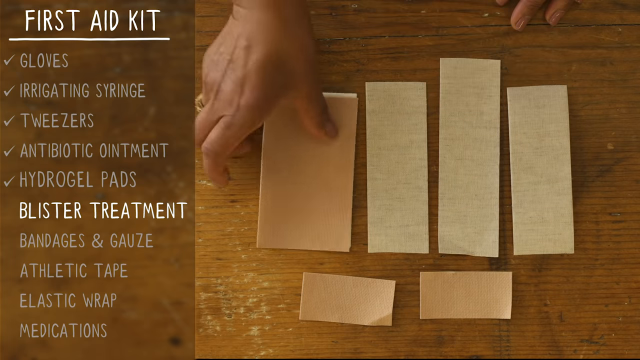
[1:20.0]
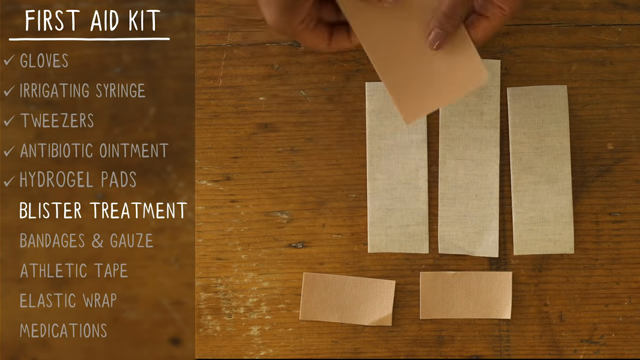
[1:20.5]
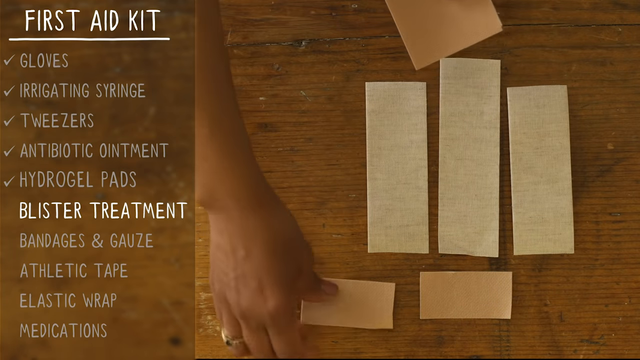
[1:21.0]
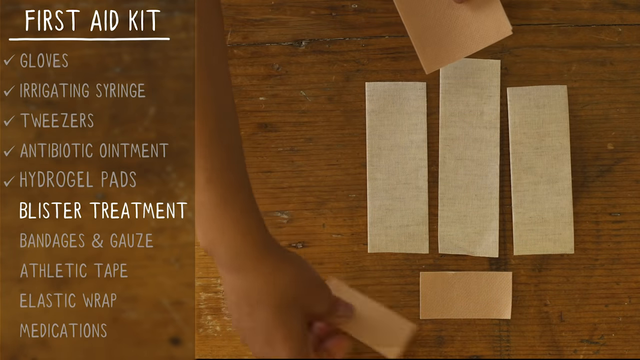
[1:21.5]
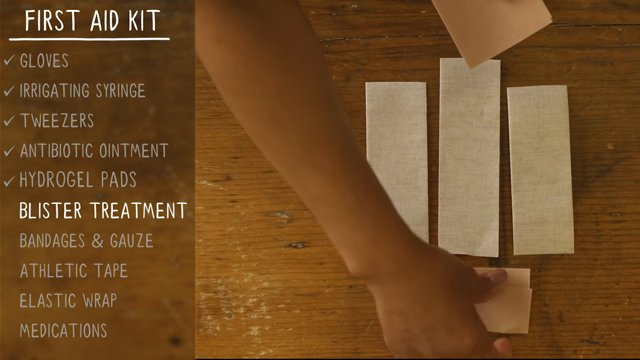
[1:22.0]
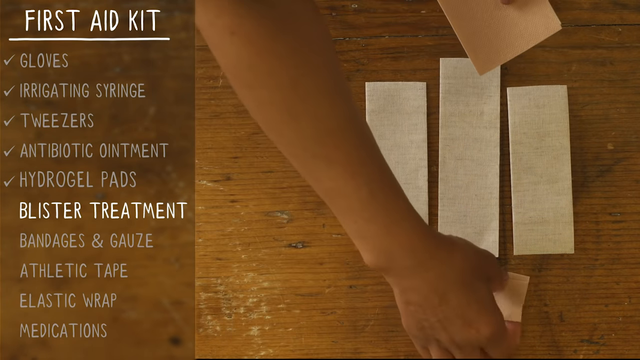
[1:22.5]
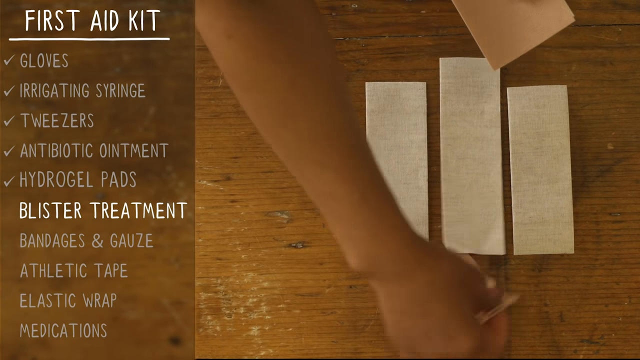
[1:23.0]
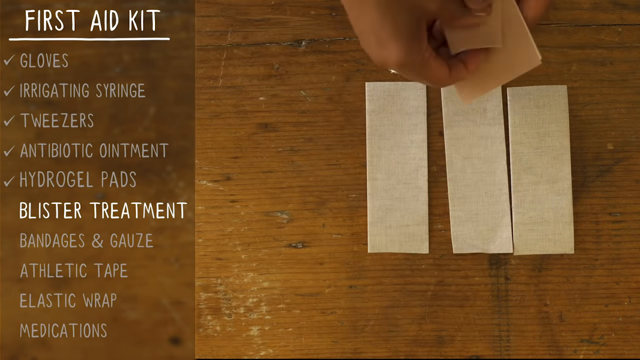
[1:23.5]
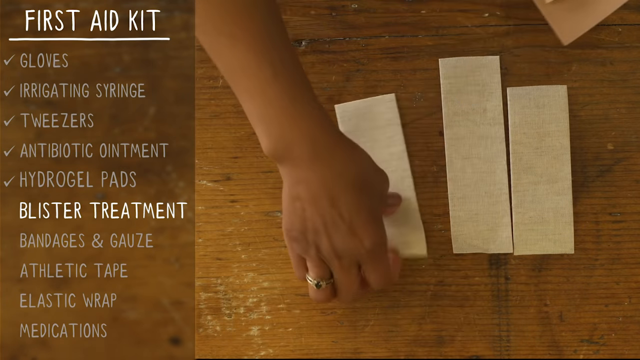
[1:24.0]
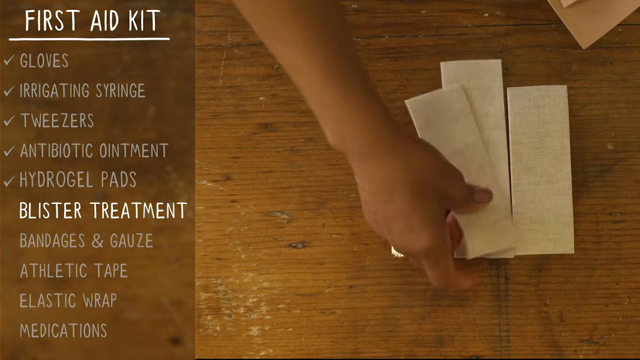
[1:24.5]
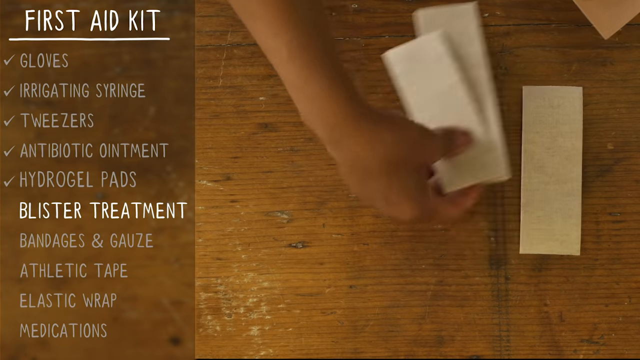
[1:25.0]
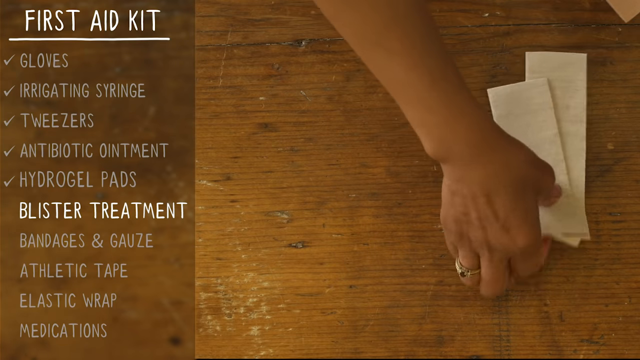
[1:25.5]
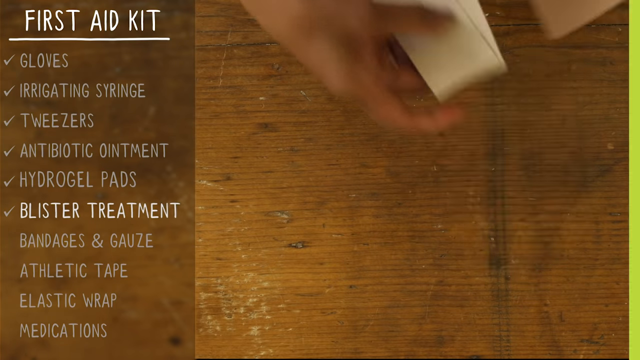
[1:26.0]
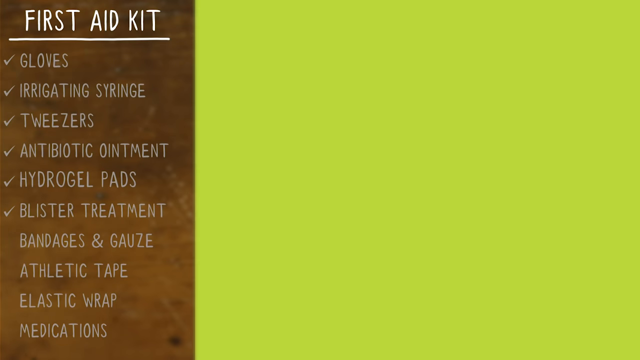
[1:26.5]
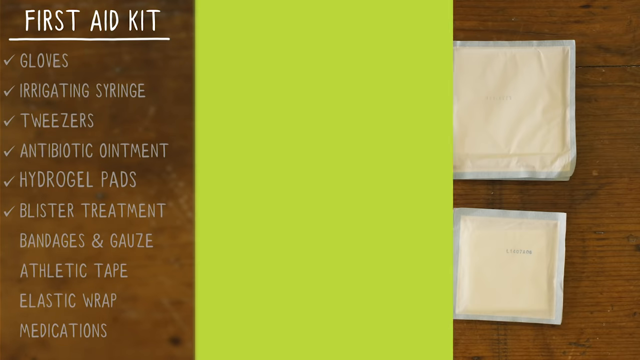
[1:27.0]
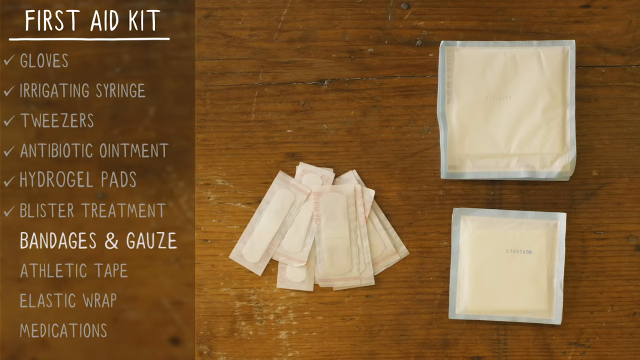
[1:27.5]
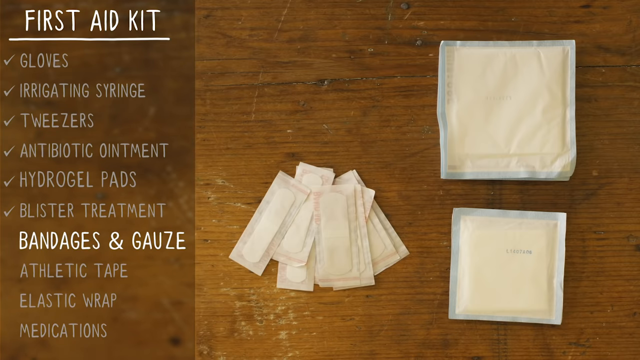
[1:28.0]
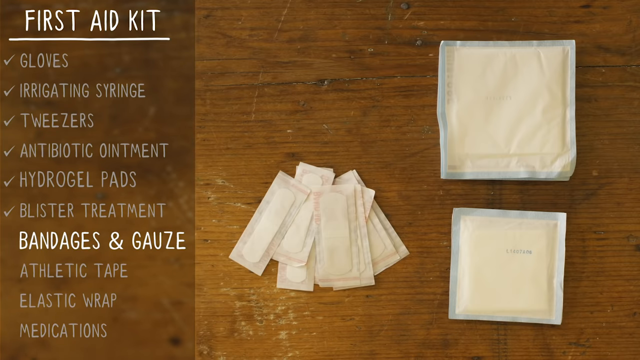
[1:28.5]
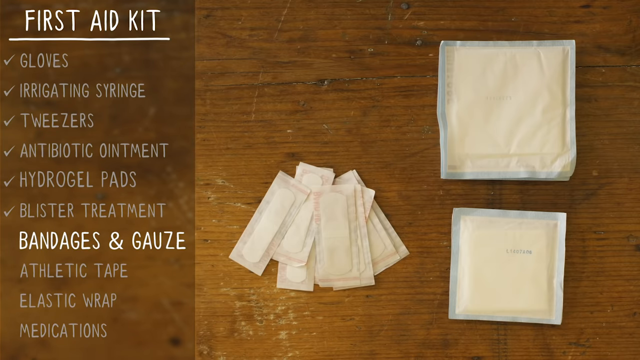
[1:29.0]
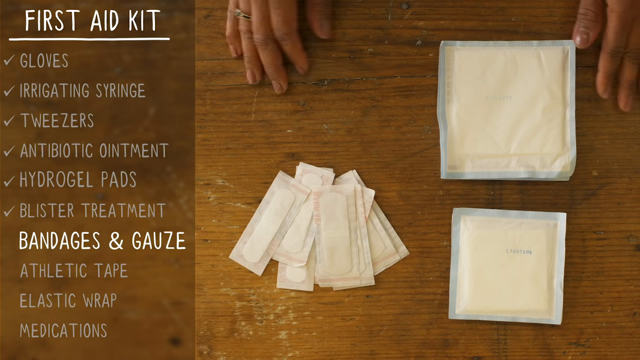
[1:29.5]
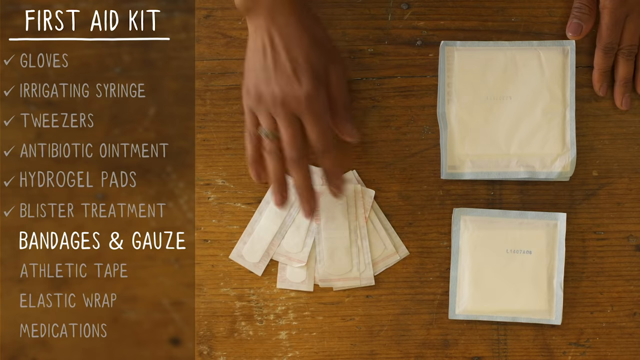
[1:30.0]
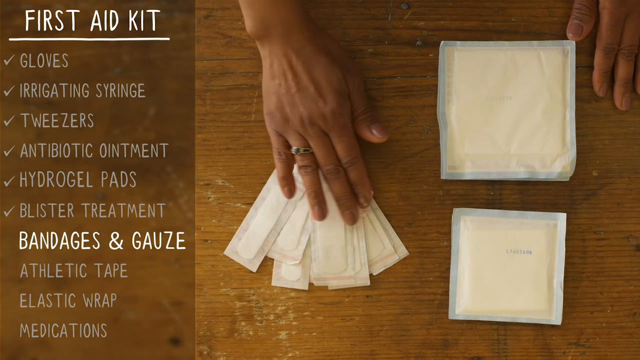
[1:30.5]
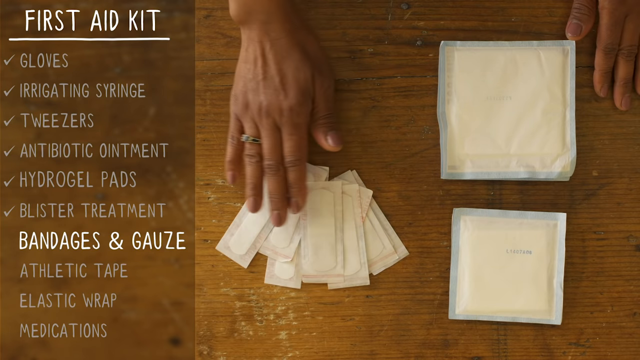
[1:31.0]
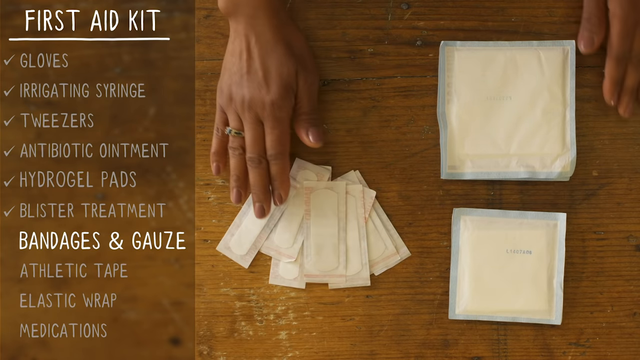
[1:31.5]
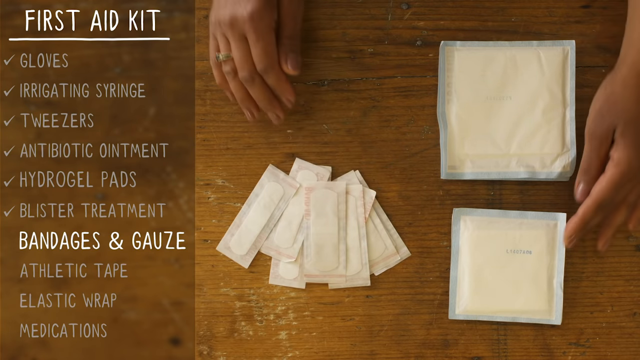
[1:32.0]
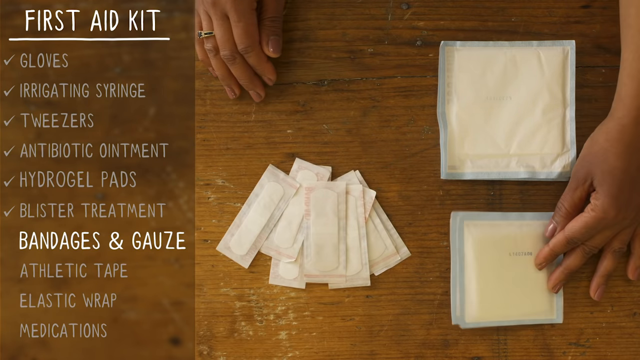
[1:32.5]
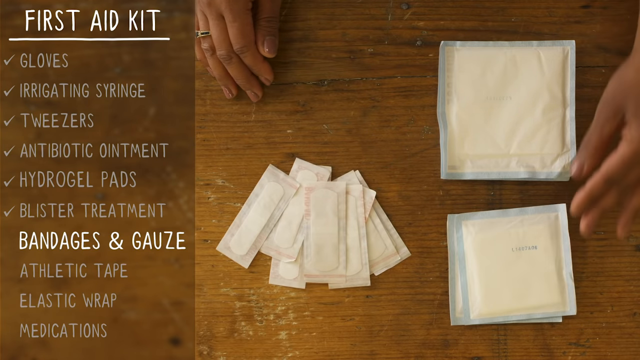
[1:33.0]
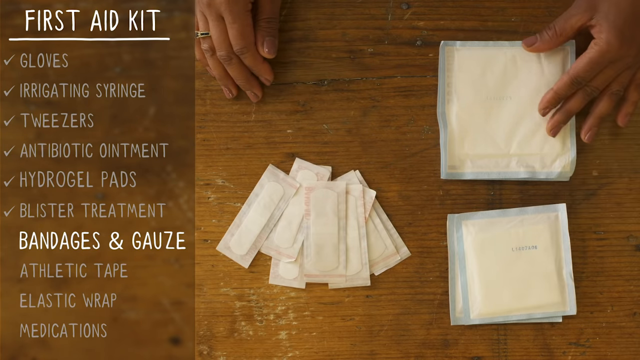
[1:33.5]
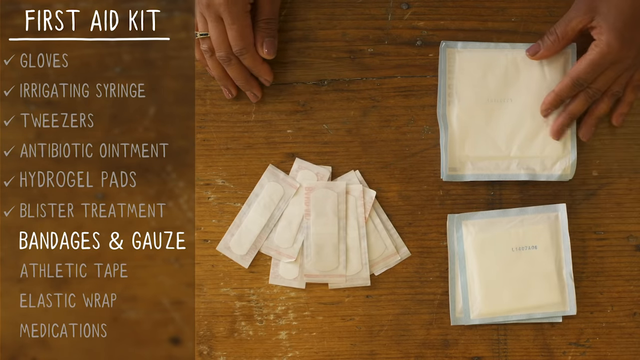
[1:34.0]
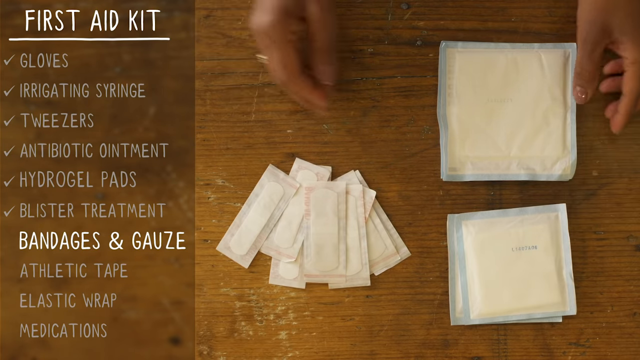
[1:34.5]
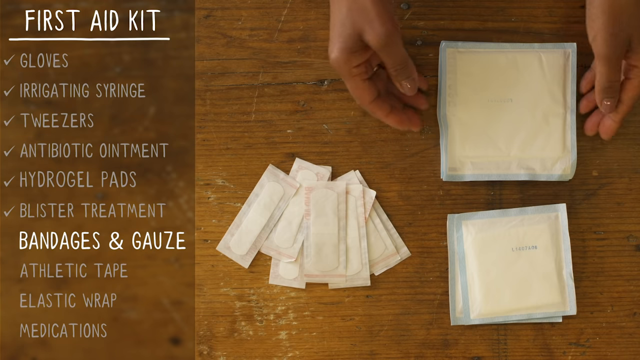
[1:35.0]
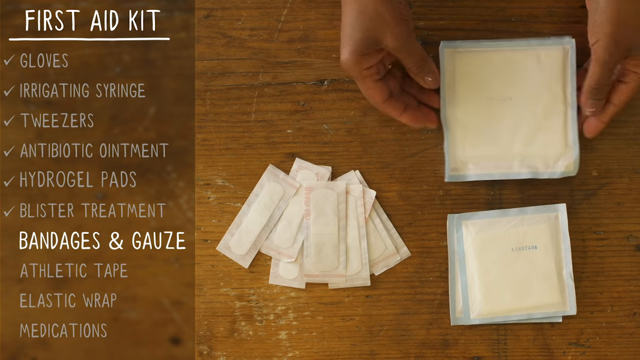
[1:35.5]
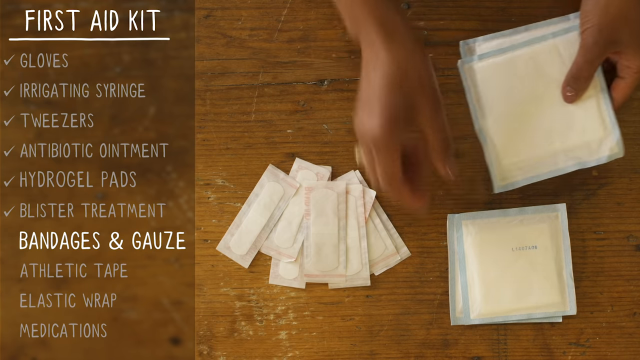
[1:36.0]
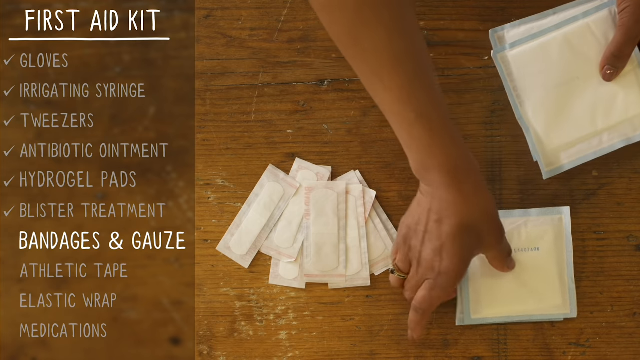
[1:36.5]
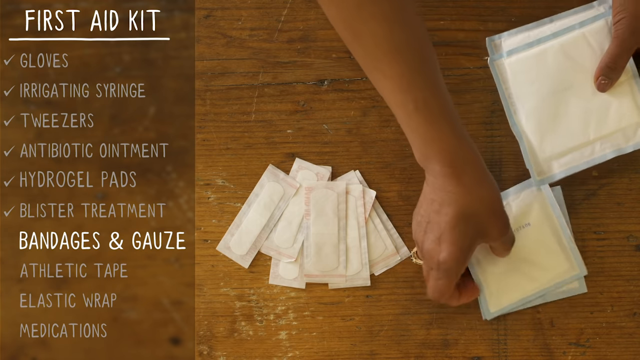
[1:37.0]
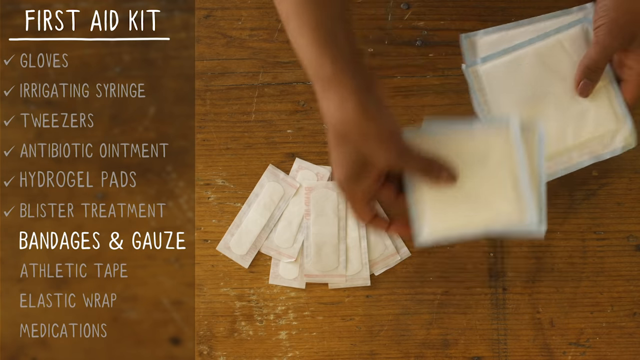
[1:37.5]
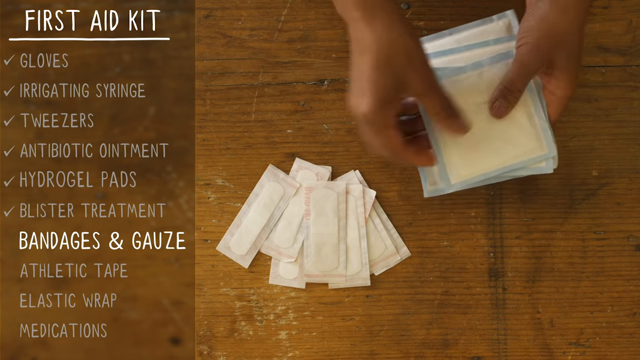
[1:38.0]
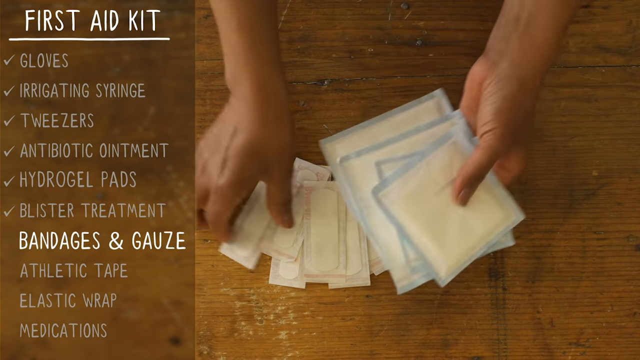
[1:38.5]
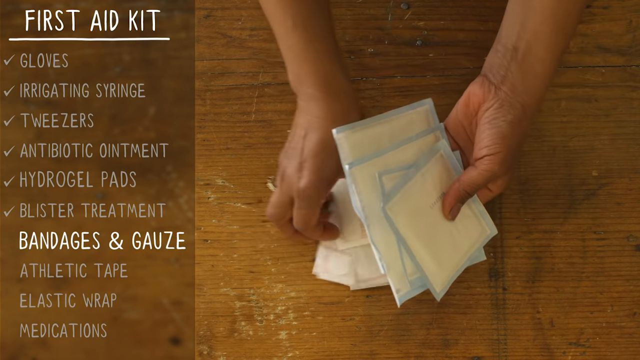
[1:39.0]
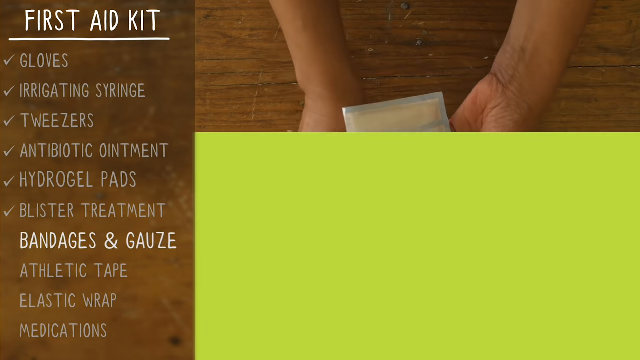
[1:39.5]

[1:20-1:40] On the left side of the screen, a list in white uppercase letters reads "first aid kit, gloves, irrigating syringe, tweezers, antibiotic ointment, hydrogel pads, blister treatment, bandages and gauze, athletic tape, elastic wrap, and medications". The main footage shows a brown wooden table with six blister treatment pads of various cuts and sizes laid out across it. An African American girl's hands pick up the hydrogel pads one by one and take them off the table. The video then cuts to a close-up of packages of band-aids and gauze in various sizes: seven band-aids laid out in a pile on the table and two large square containers of sealed gauze strips. The girl neatly straightens some of the band-aids, then starts picking up the gauze and taking it off the table.